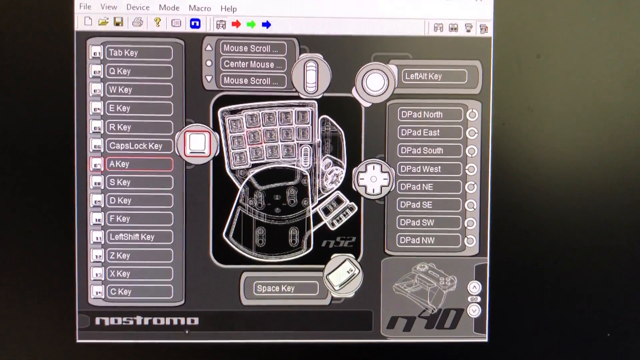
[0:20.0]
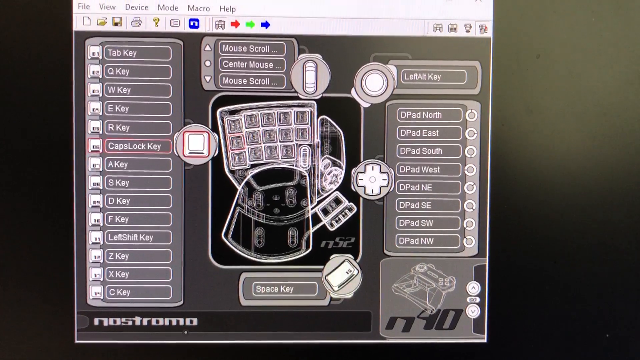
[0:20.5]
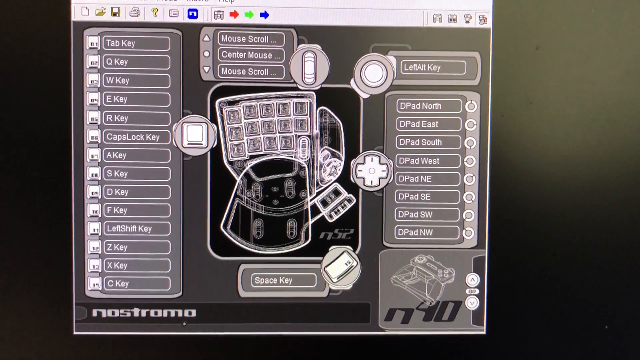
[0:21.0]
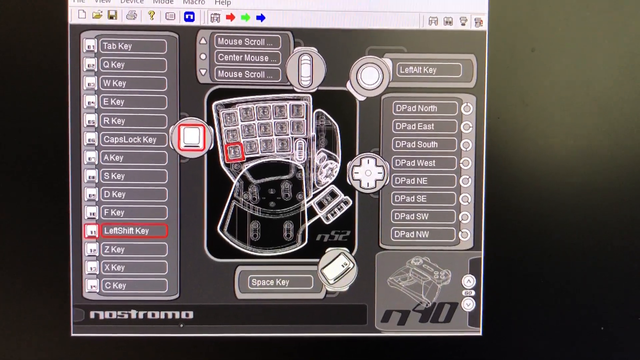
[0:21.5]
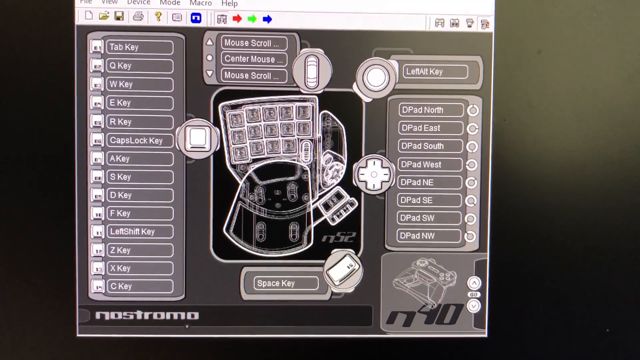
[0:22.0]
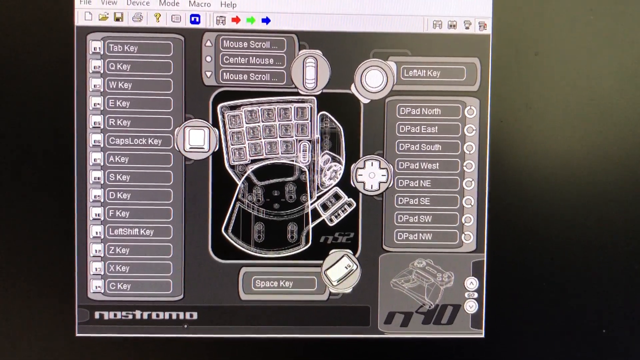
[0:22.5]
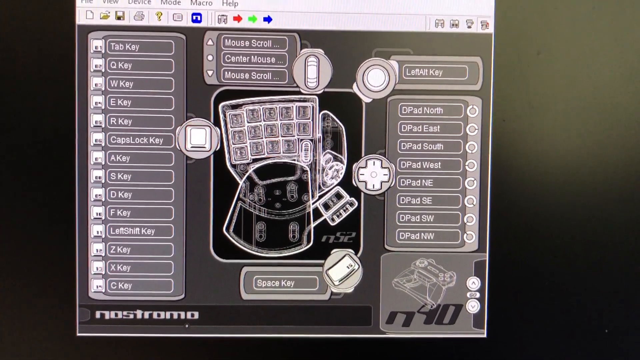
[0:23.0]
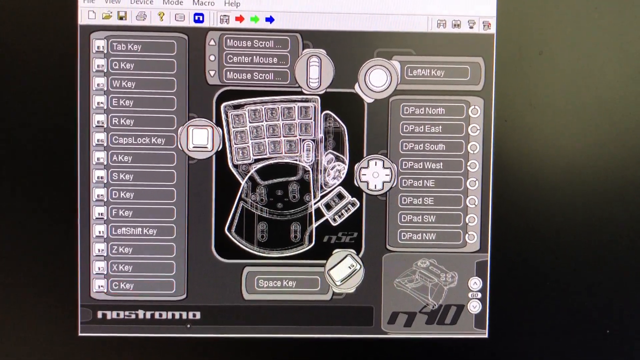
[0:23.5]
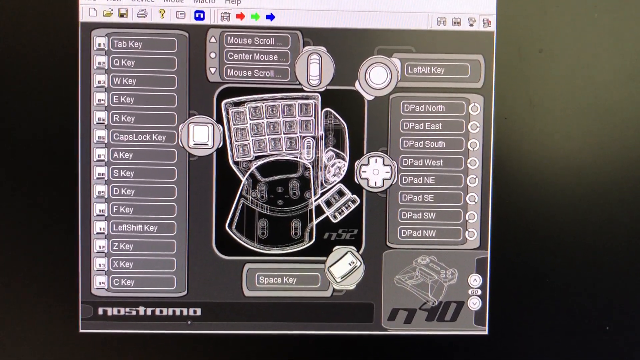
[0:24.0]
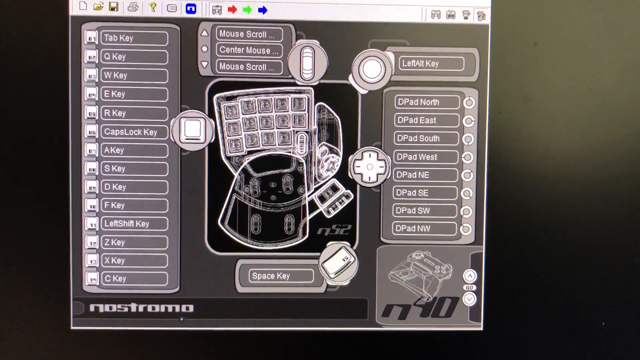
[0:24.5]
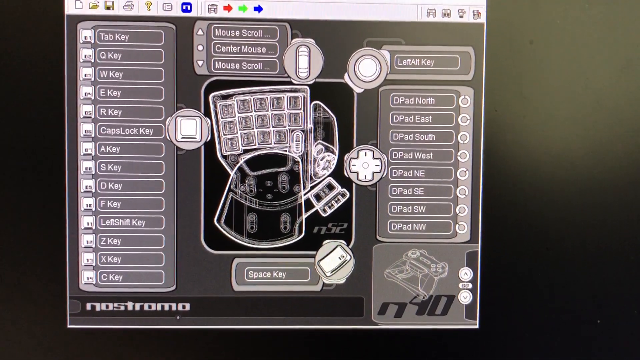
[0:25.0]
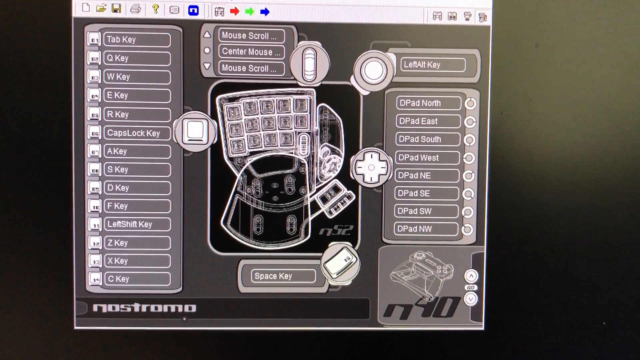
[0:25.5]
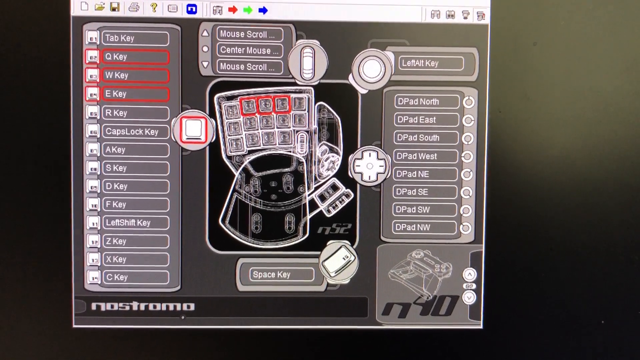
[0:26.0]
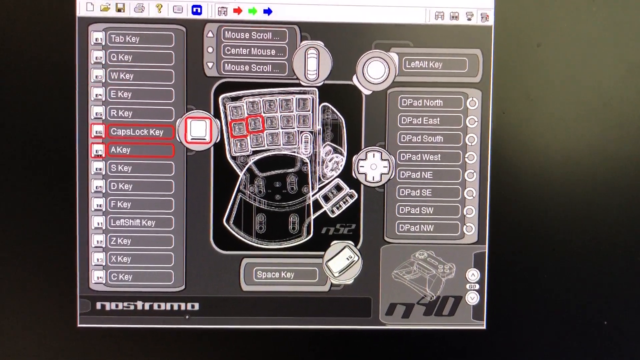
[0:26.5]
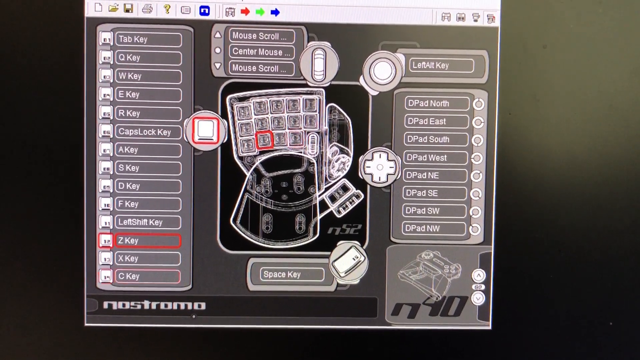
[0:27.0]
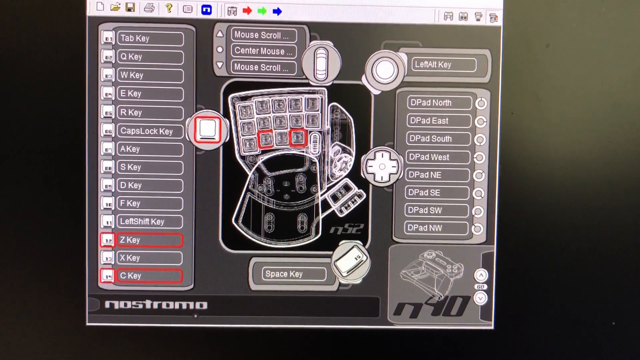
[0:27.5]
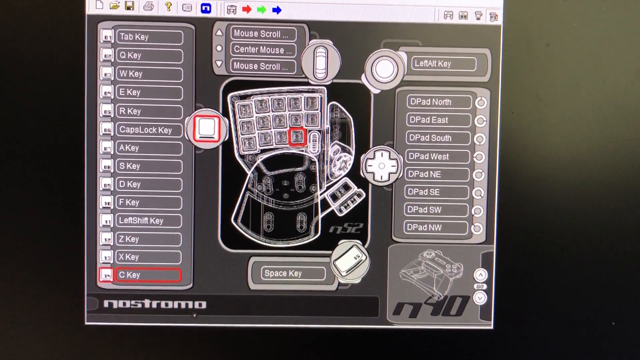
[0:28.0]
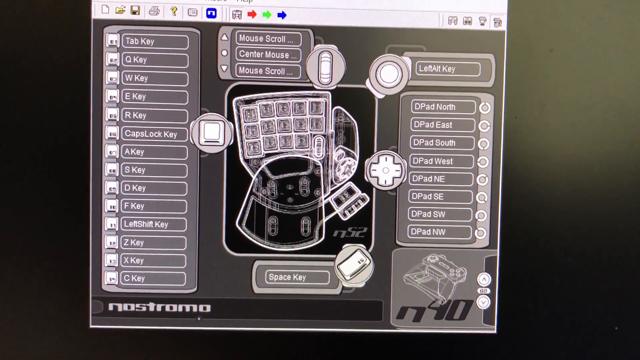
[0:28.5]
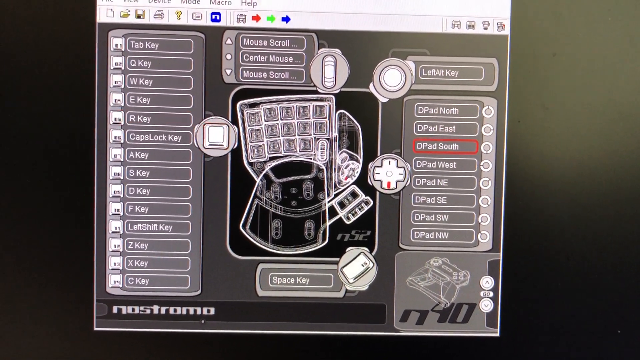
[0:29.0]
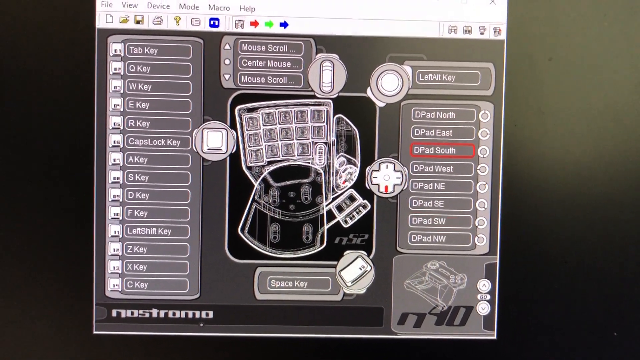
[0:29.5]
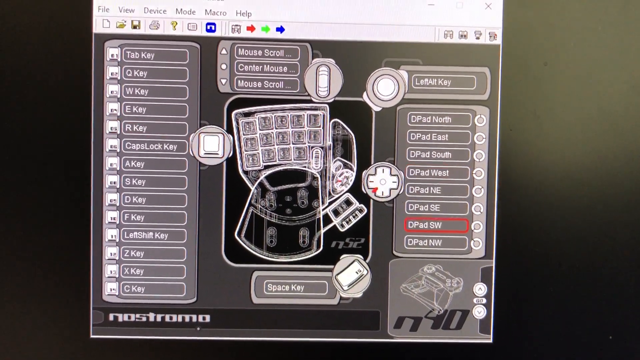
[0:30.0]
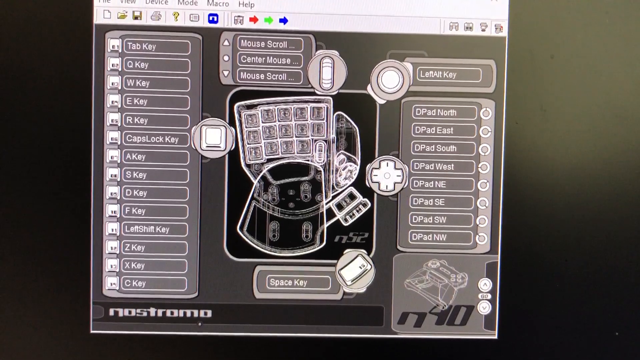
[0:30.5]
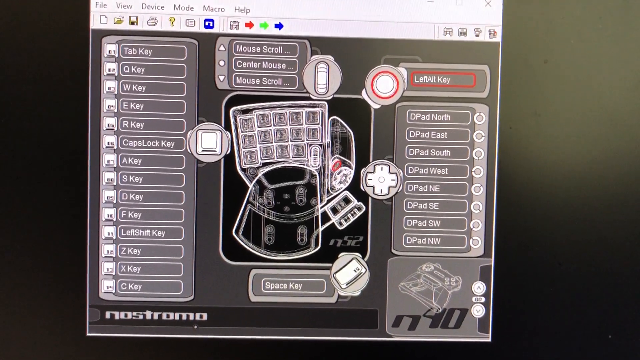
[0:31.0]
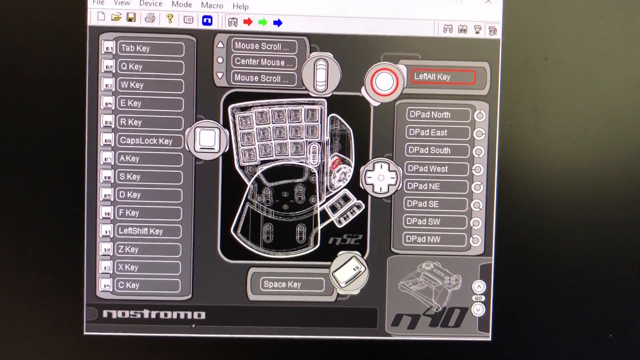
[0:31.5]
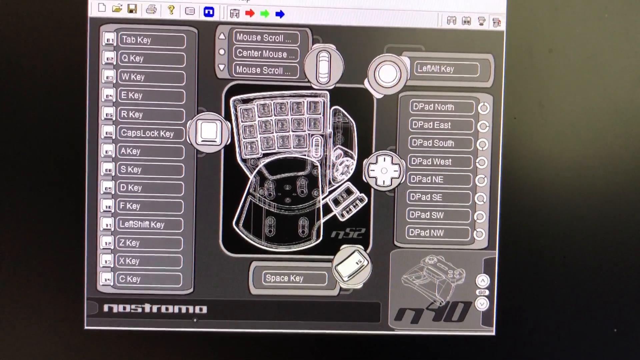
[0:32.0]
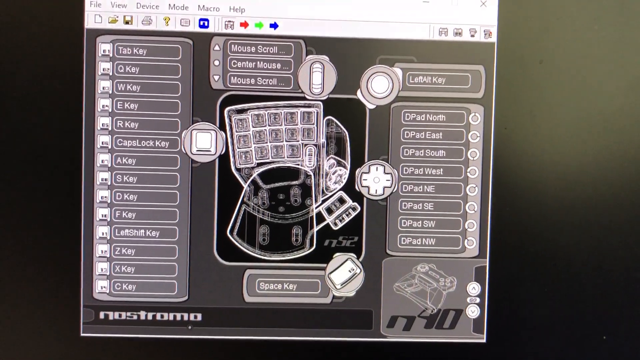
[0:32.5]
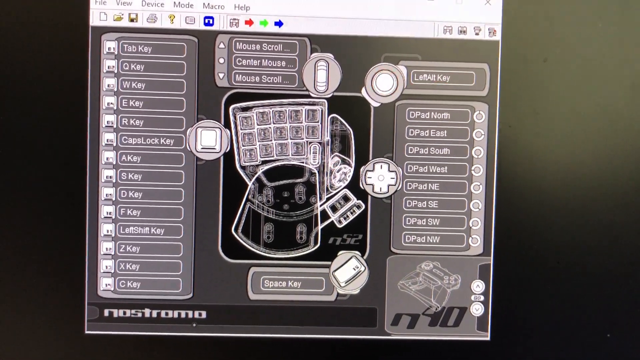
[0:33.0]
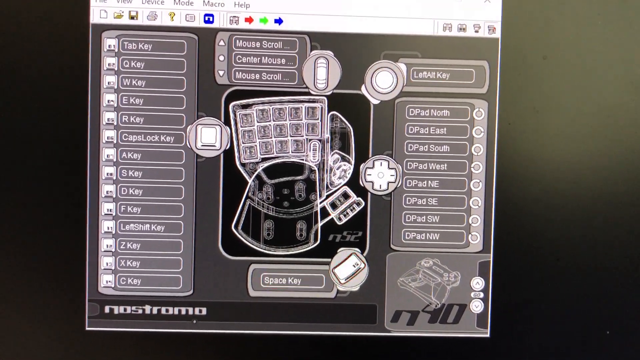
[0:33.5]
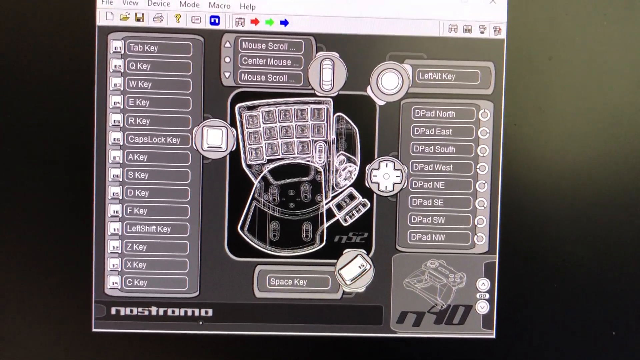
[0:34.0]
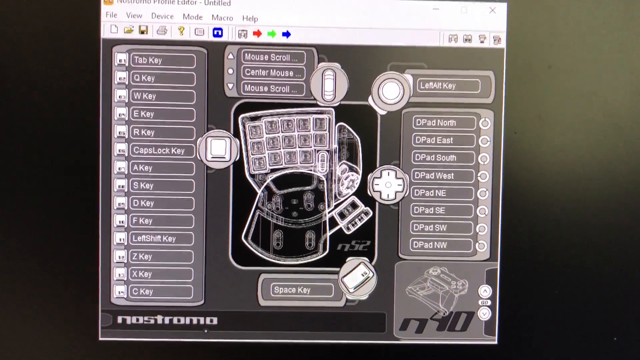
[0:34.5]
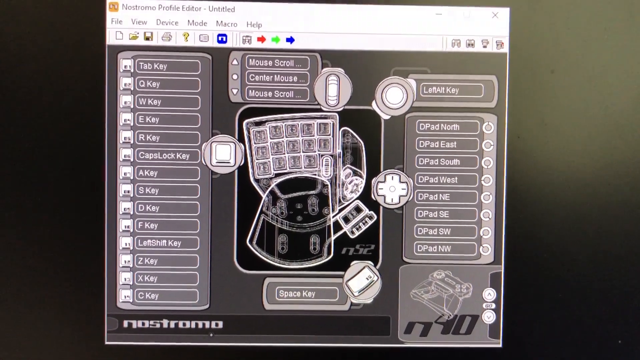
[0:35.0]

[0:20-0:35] Somebody appears to be programming a keyboard via some software. The same diagram is shown, with a very dark gray main background. The links are in white text with white rectangles around them, and text in the middle of each indicates which key it is, such as the left or alt key and various number keys. In the middle is a diagram of one side of the keyboard, a white line drawing shown from above. As things are programmed in, each space lights up with a red highlight showing what will be configured to which key. At the top is a typical app taskbar with new, save, file, print and help icons. No people appear; the main focus is the app on the screen.